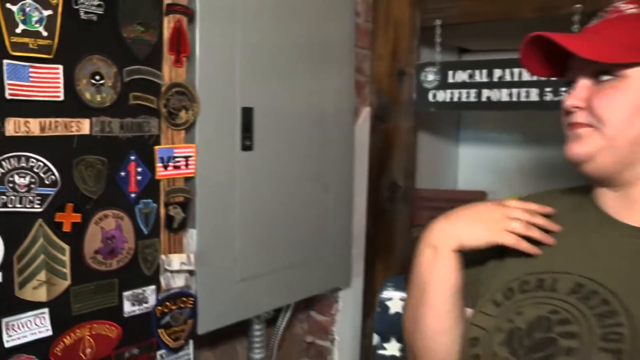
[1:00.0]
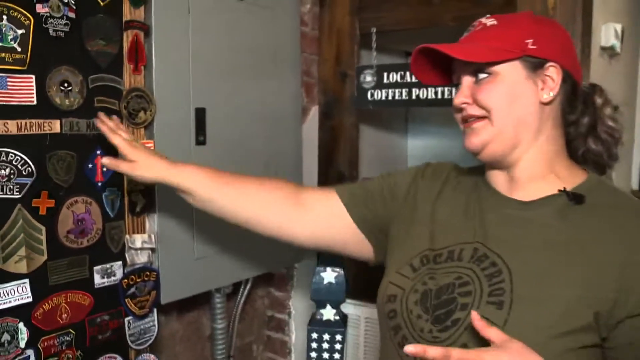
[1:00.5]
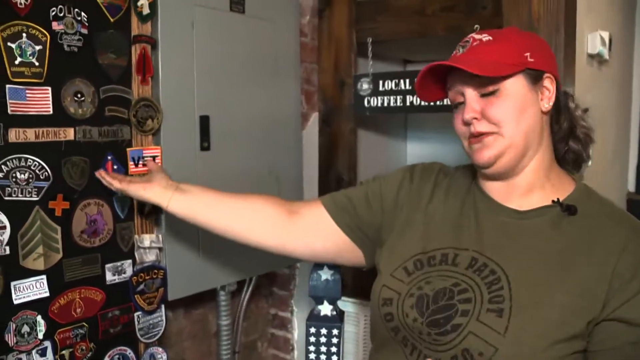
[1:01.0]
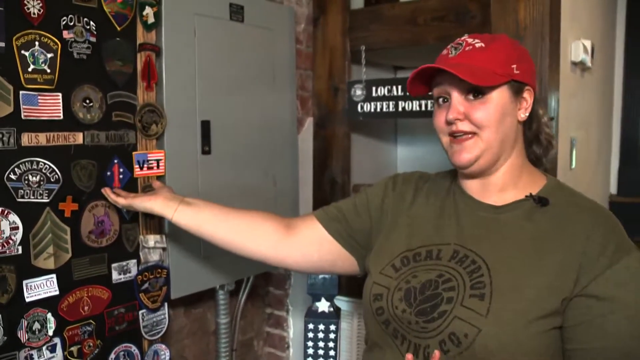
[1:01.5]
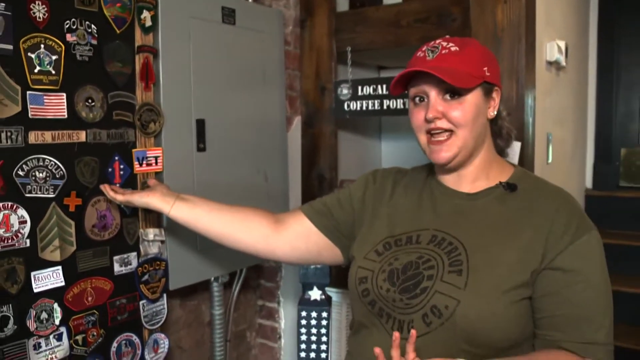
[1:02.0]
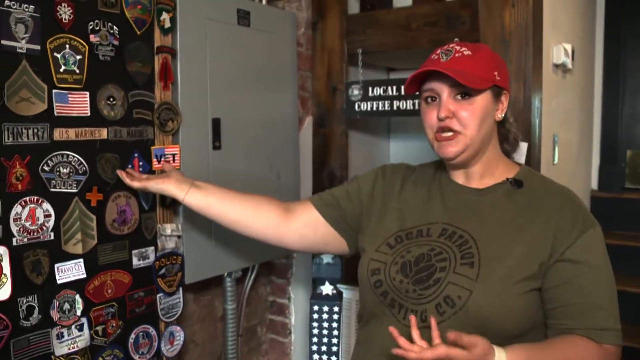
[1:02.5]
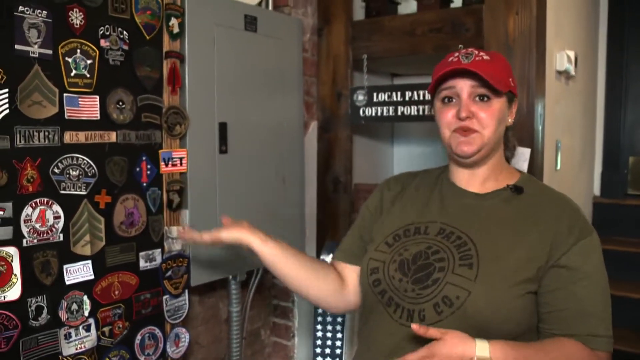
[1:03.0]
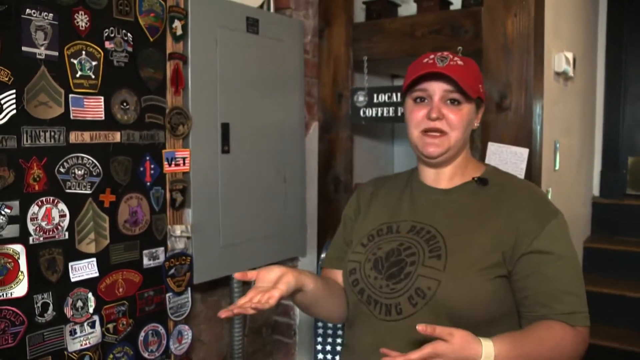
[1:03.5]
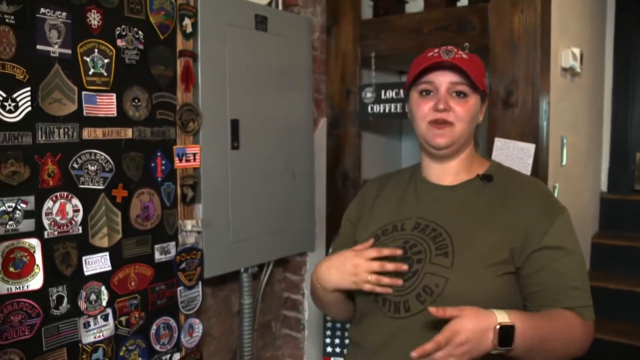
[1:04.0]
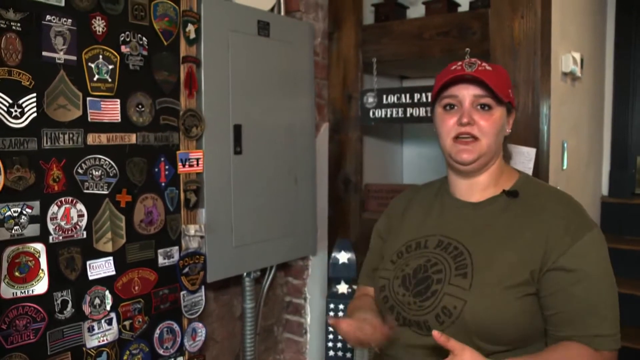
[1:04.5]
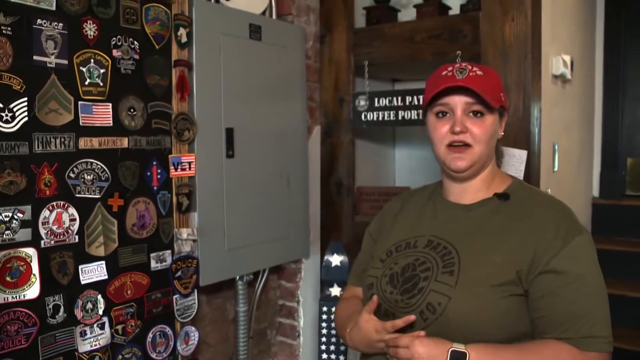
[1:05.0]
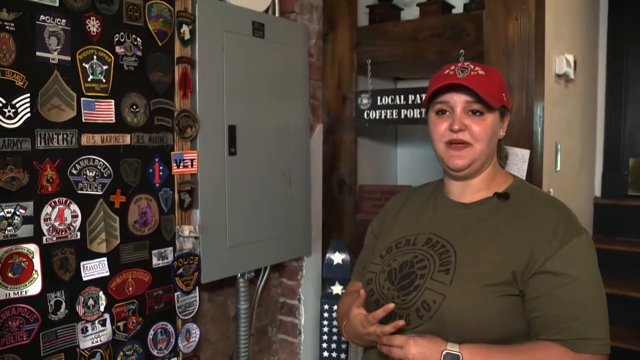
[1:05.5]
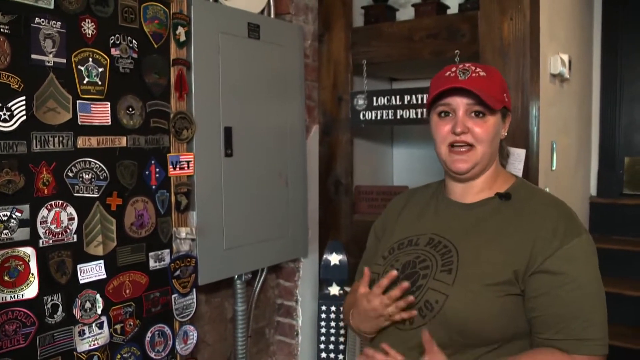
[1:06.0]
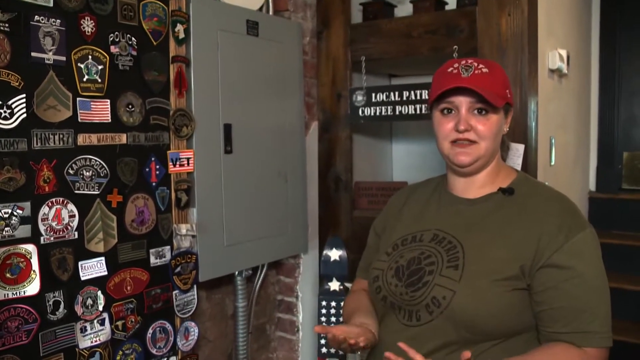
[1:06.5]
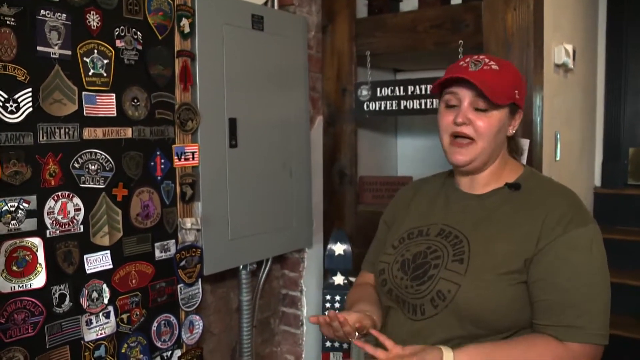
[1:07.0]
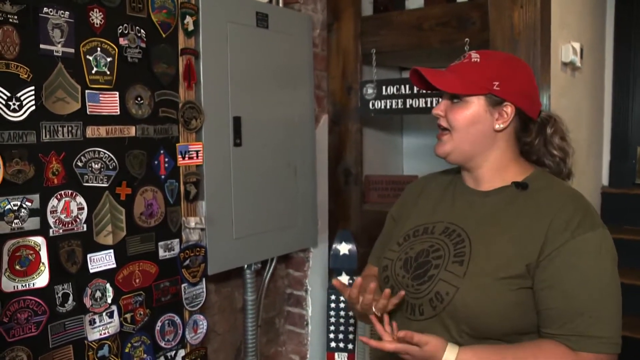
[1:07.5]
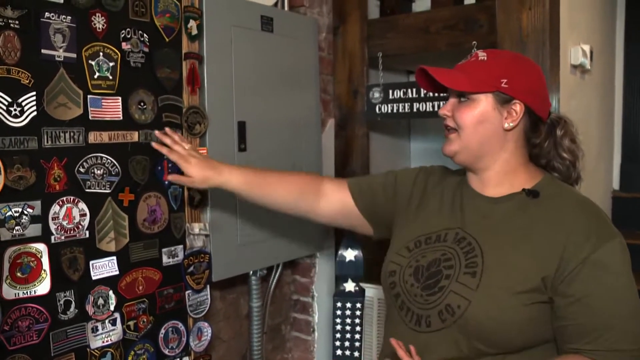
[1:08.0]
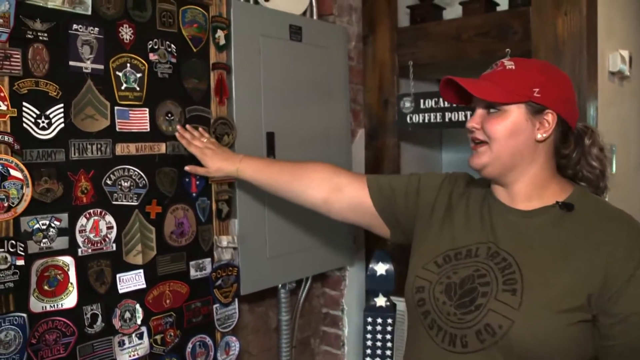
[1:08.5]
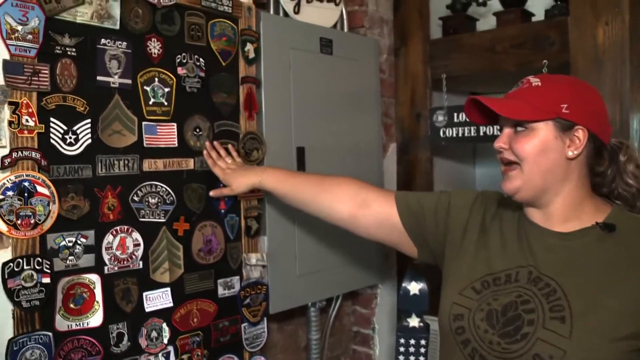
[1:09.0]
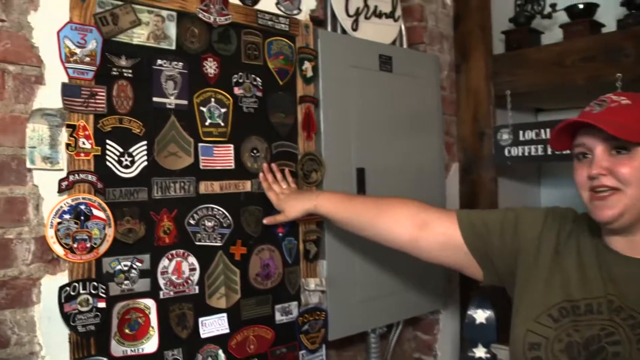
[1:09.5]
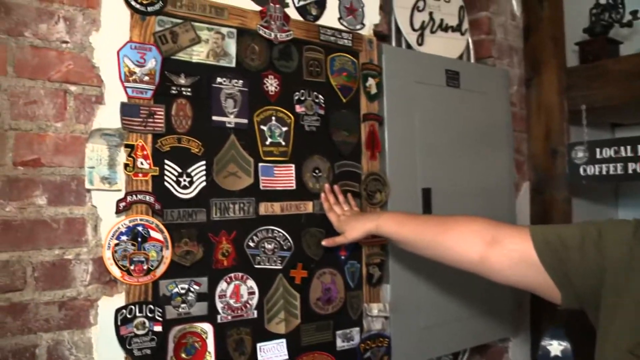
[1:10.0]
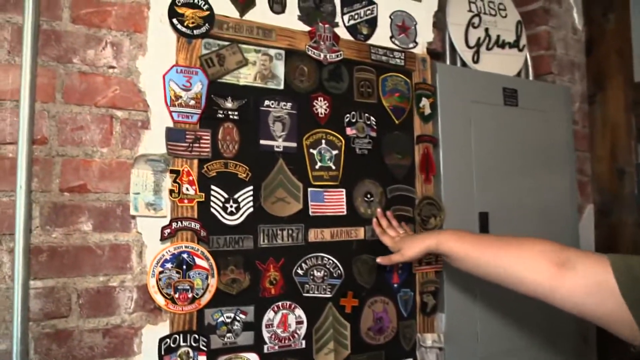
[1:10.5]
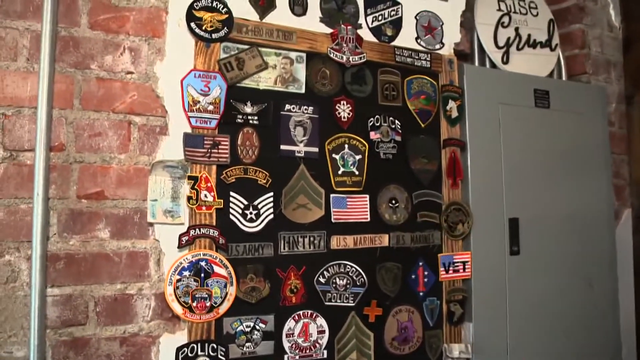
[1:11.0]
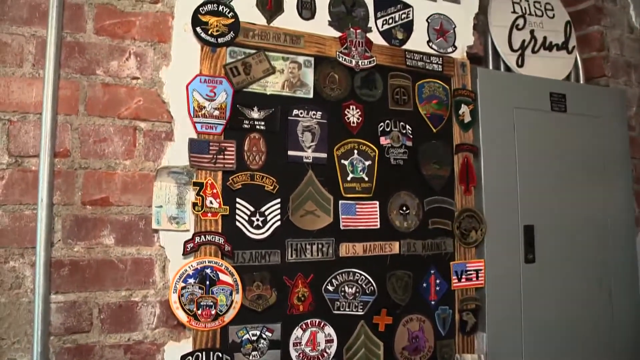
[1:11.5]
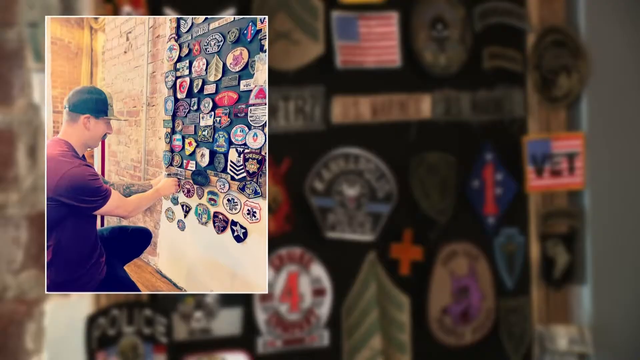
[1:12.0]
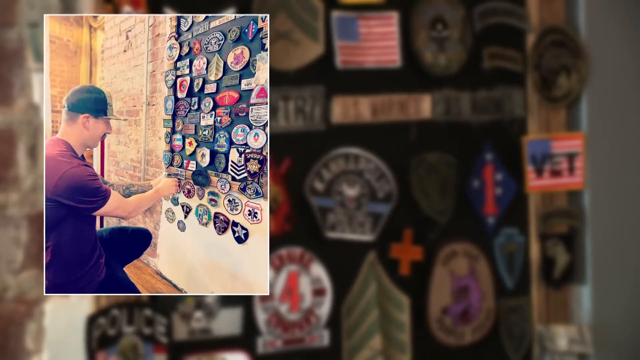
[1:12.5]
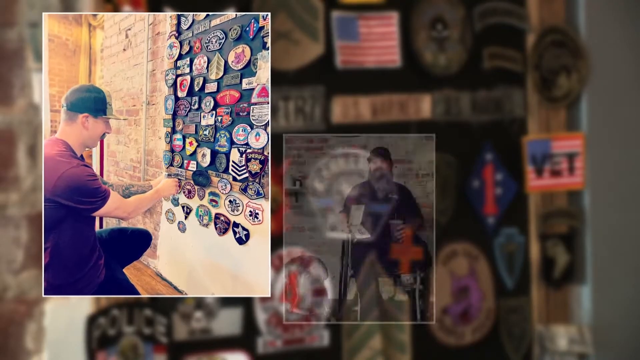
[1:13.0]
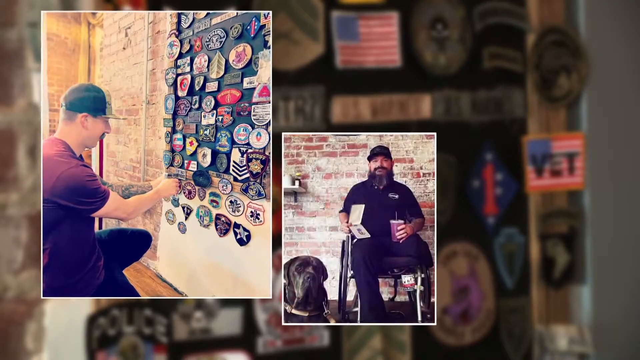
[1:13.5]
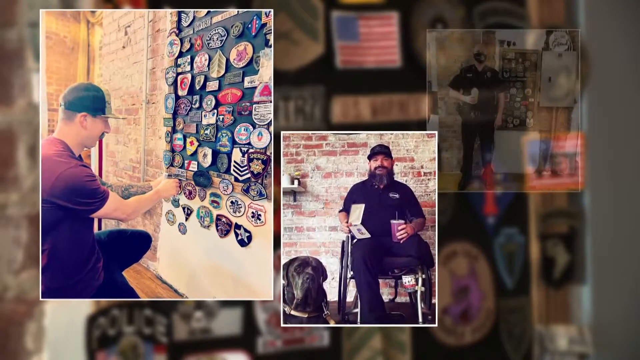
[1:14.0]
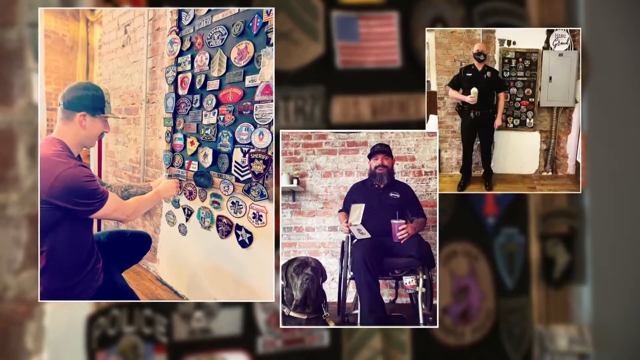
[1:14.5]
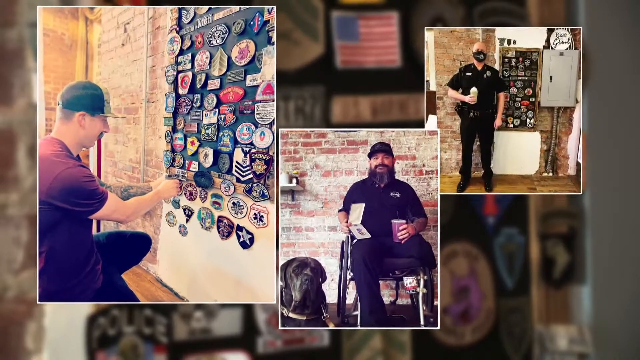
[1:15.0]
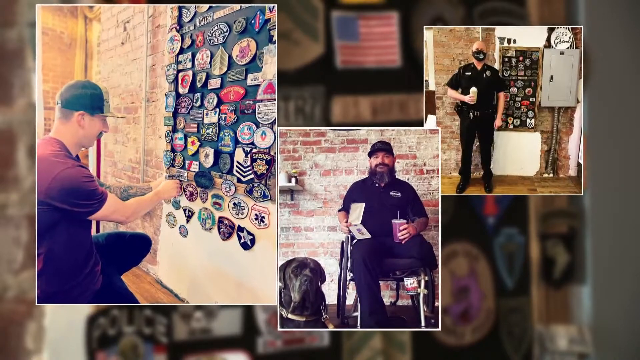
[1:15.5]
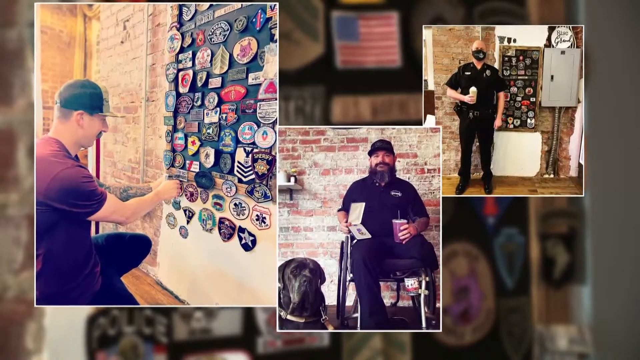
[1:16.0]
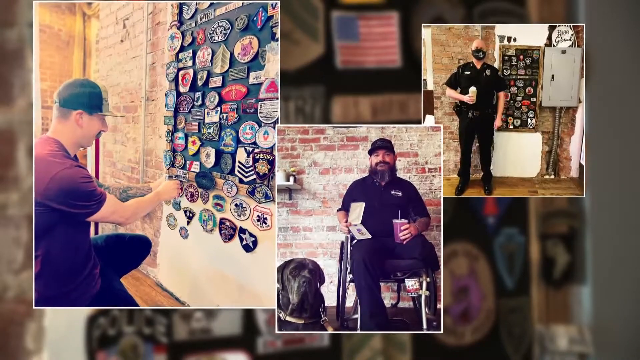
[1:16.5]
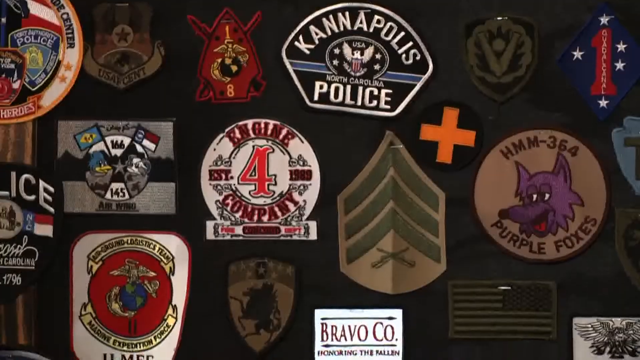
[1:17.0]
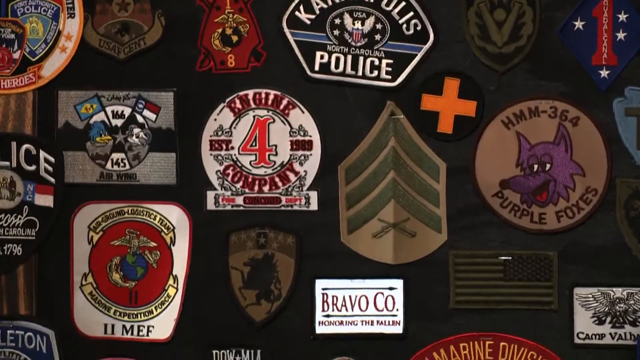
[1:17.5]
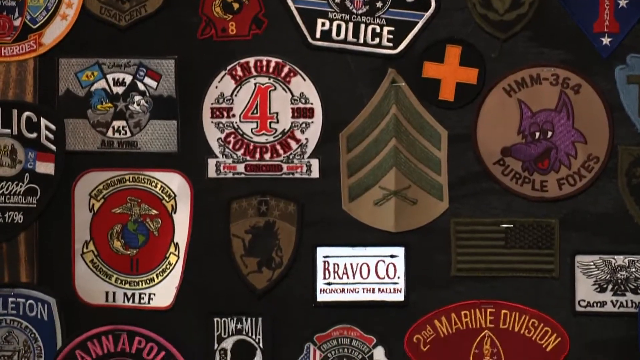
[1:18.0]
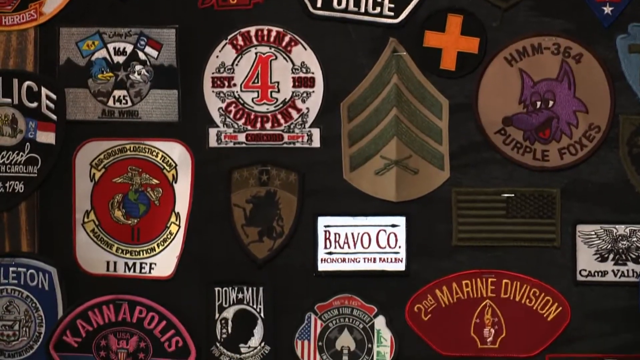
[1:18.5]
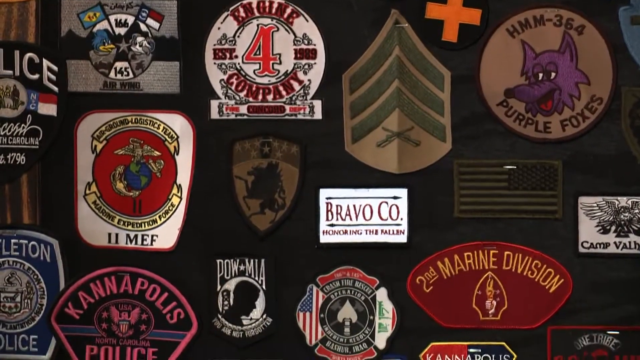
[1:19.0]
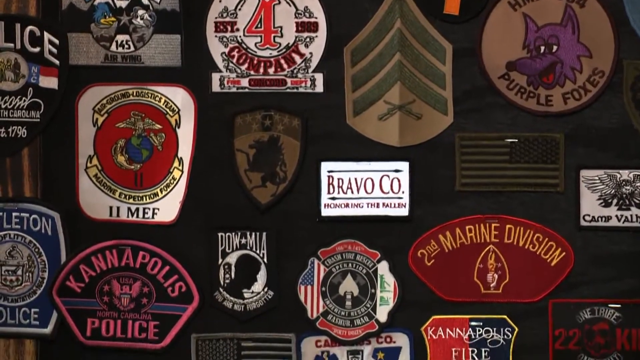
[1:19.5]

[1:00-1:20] The same woman in the red cap is apparently talking about the badges on the walls, as she points to them. Along with the red cap she wears a green khaki top with the coffee brand's logo on it. As she points, three separate pictures come up on the screen. The first shows a man who appears to be putting one of the badges on the wall. The second shows a man sitting down who appears to possibly have only one leg and appears to be holding a medal. The third shows a man who appears to be a police officer, standing next to the badges on the wall.